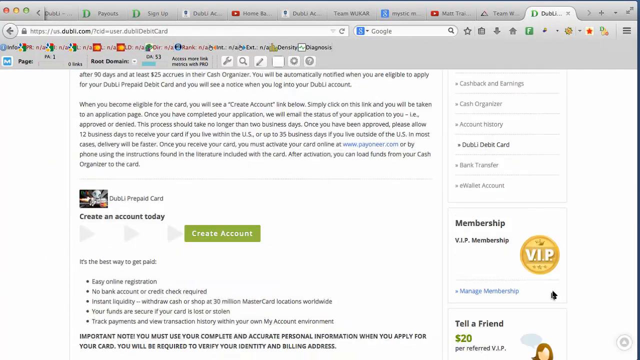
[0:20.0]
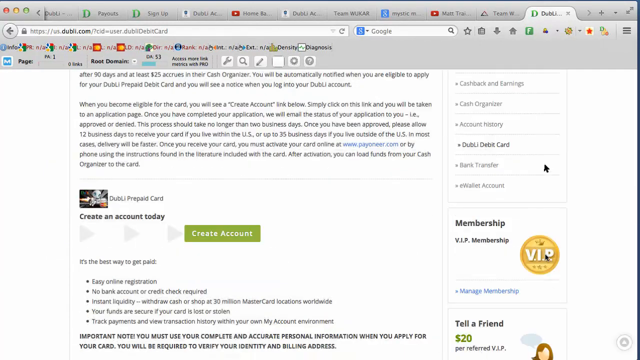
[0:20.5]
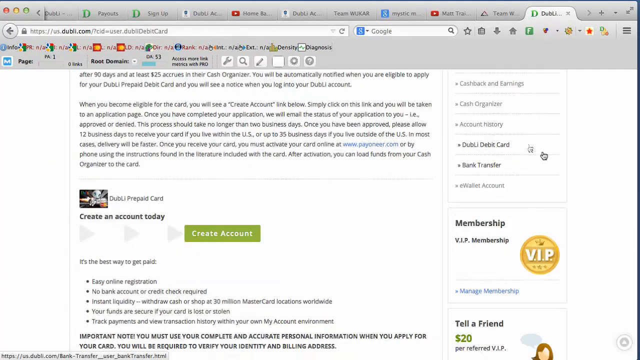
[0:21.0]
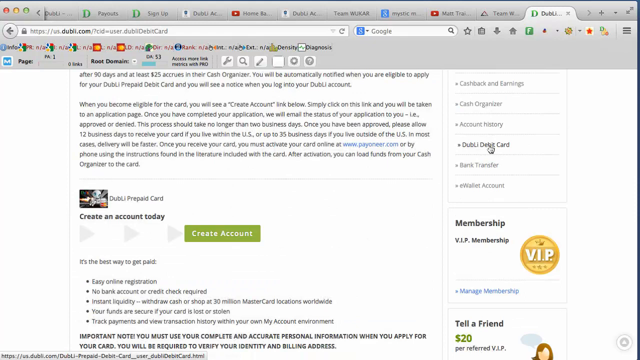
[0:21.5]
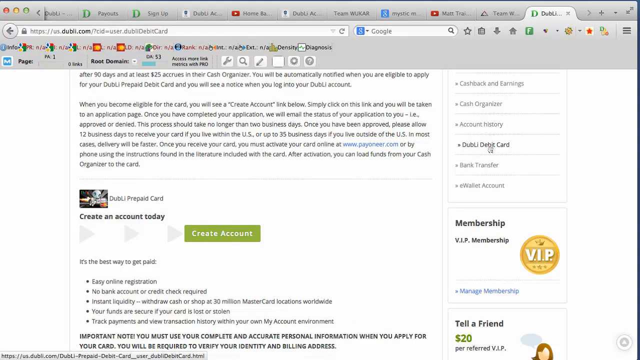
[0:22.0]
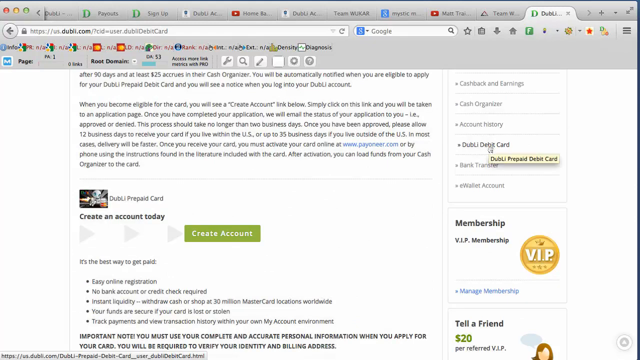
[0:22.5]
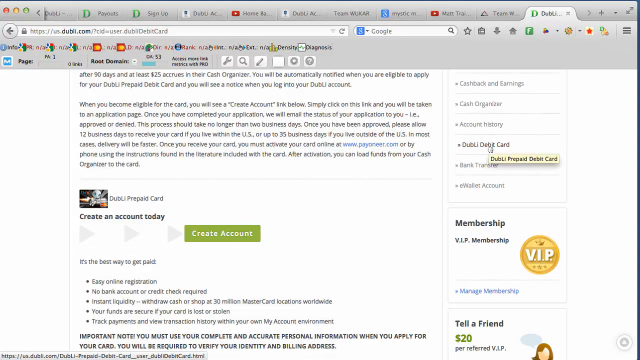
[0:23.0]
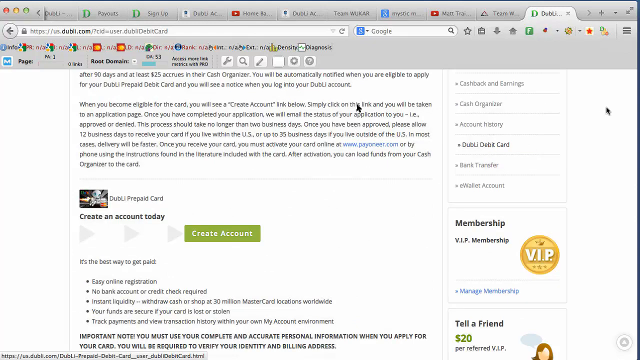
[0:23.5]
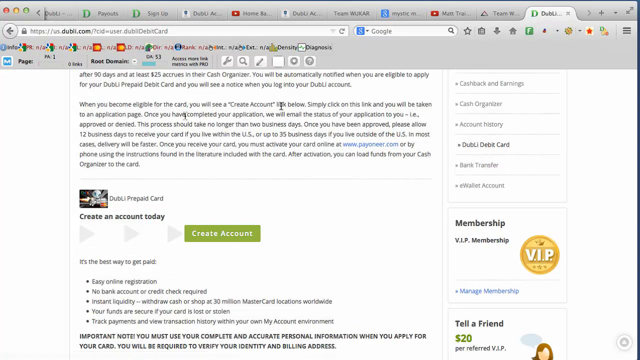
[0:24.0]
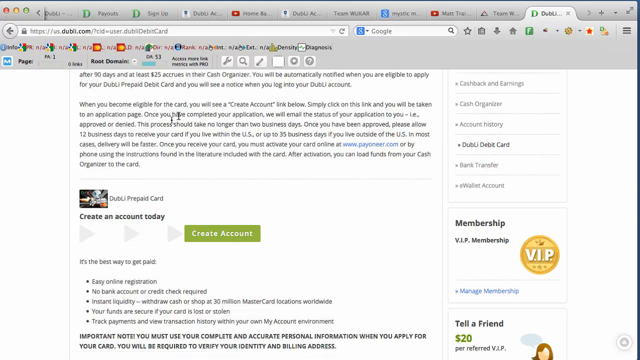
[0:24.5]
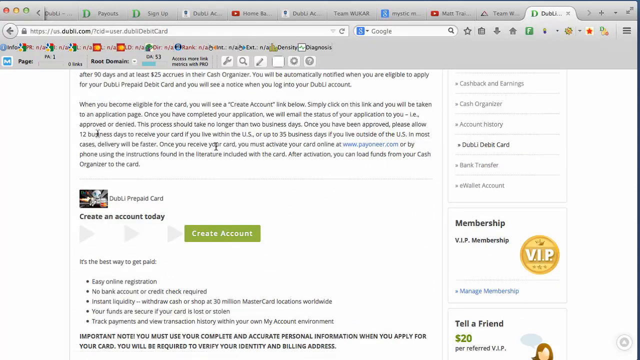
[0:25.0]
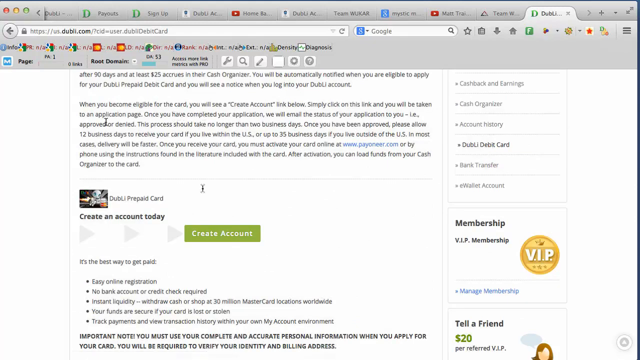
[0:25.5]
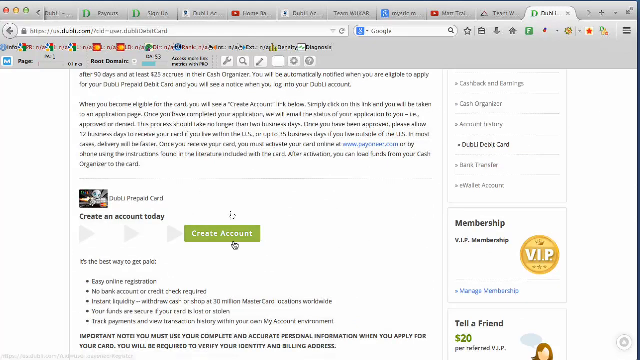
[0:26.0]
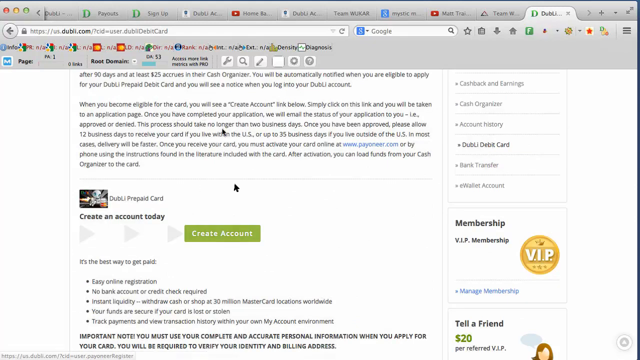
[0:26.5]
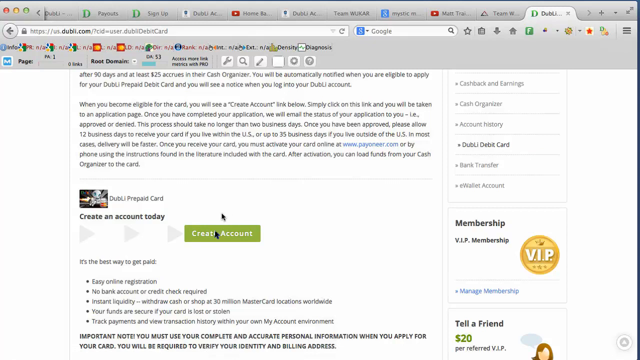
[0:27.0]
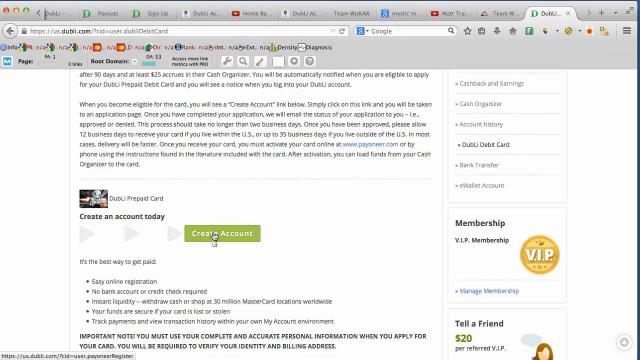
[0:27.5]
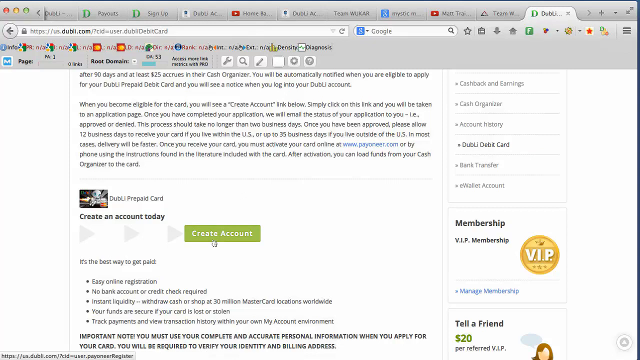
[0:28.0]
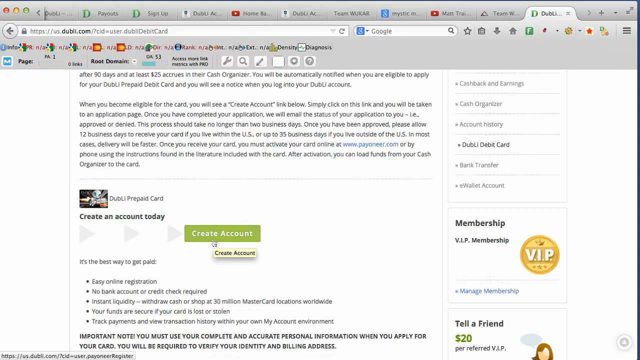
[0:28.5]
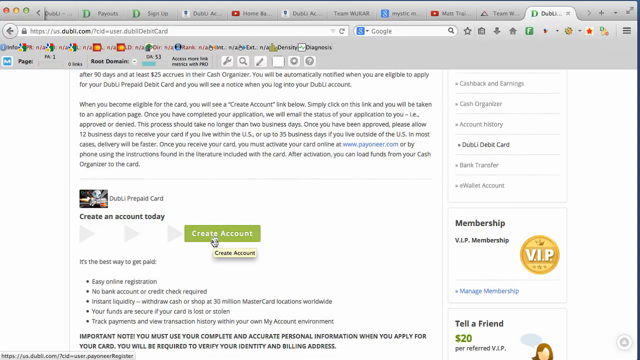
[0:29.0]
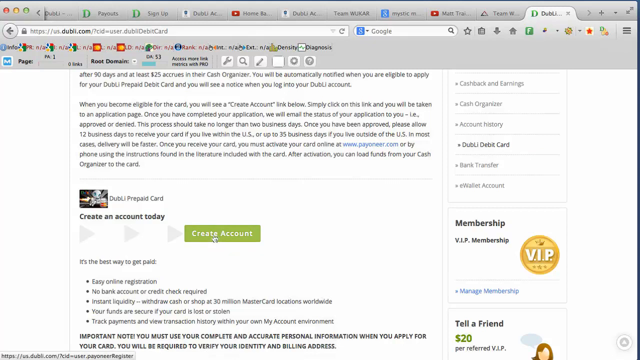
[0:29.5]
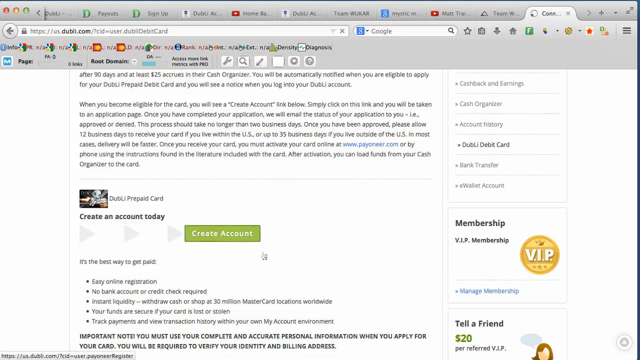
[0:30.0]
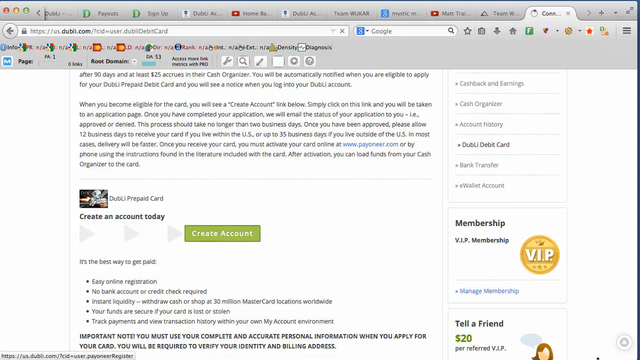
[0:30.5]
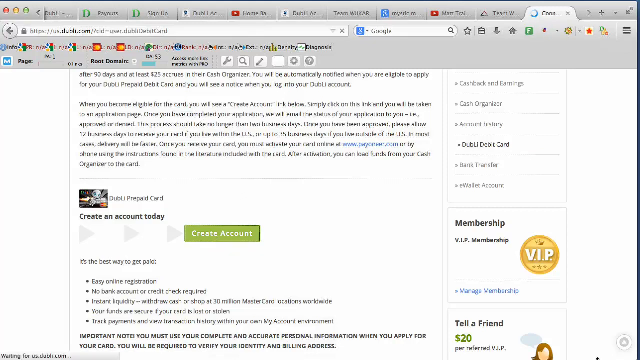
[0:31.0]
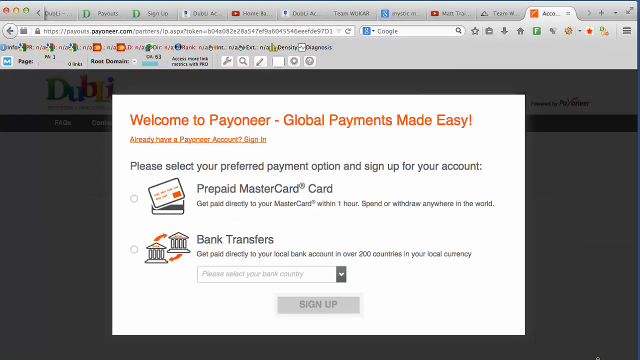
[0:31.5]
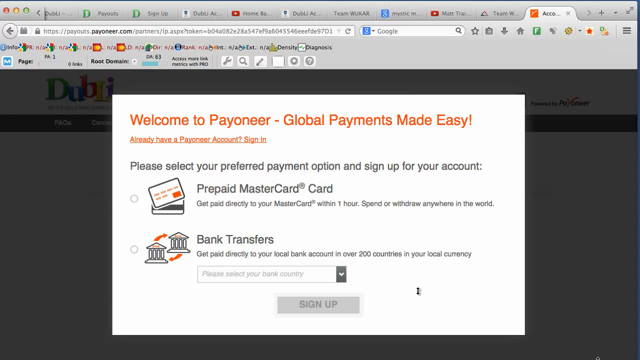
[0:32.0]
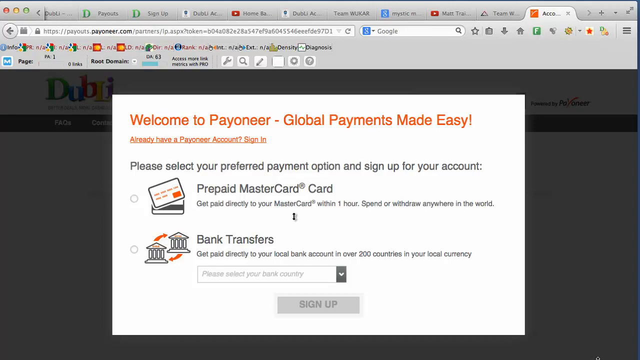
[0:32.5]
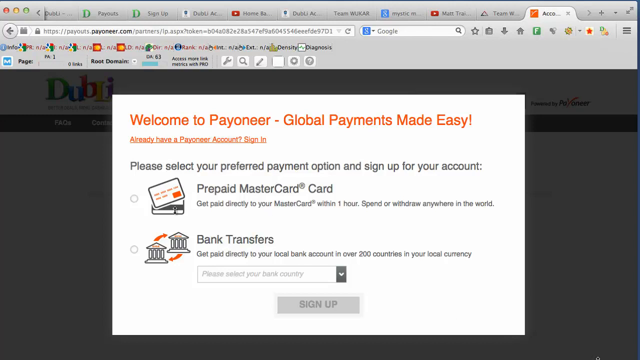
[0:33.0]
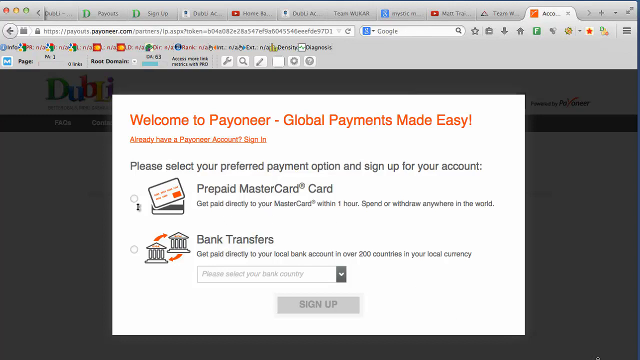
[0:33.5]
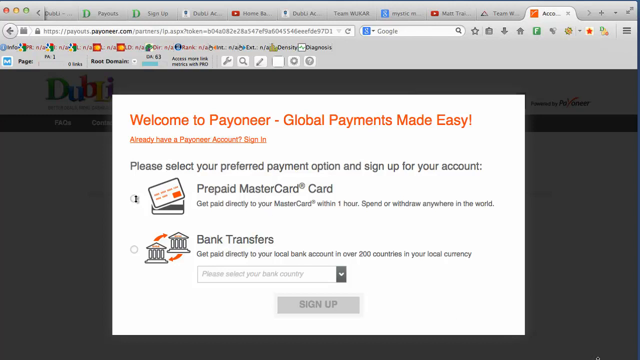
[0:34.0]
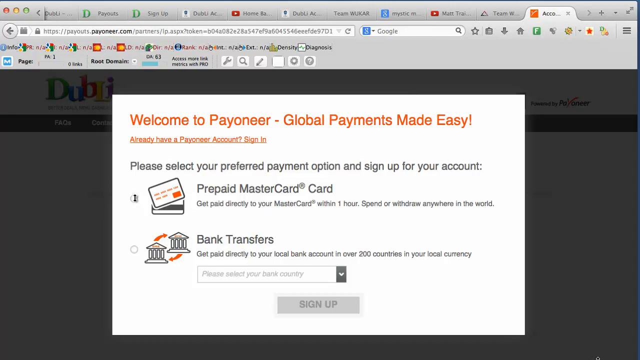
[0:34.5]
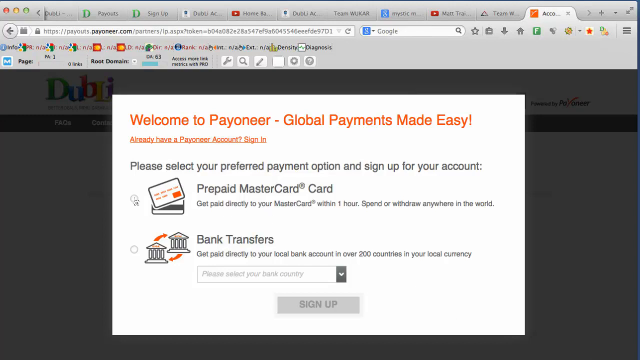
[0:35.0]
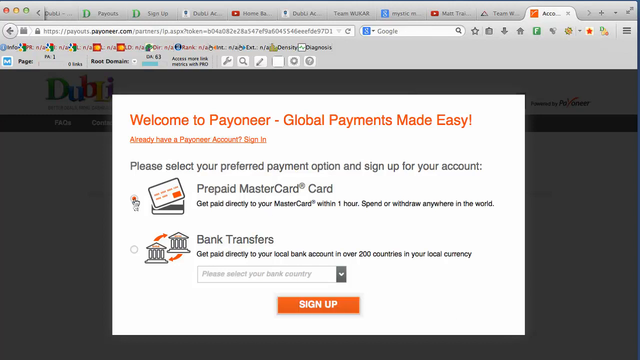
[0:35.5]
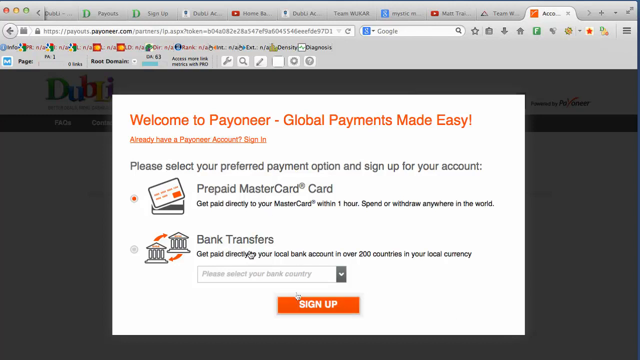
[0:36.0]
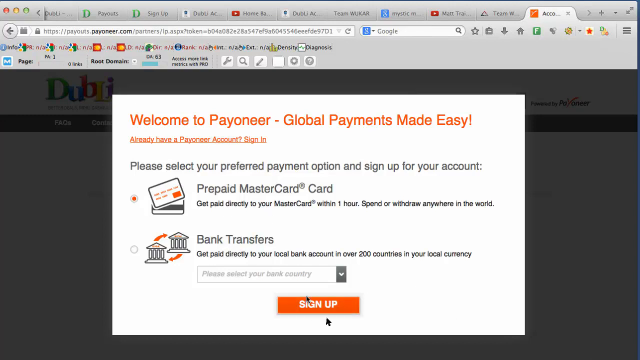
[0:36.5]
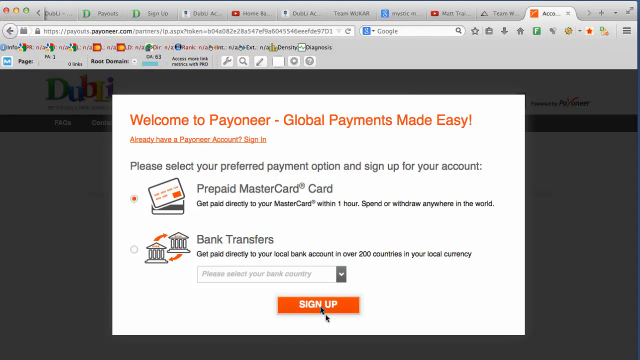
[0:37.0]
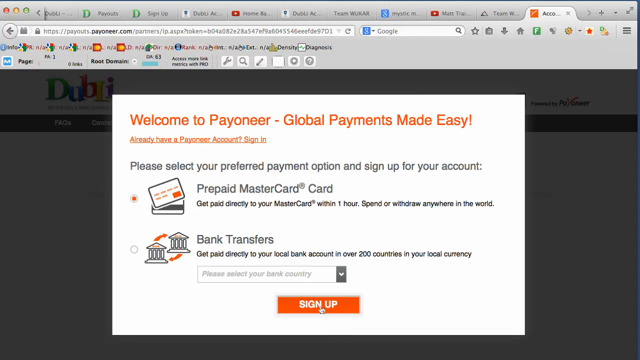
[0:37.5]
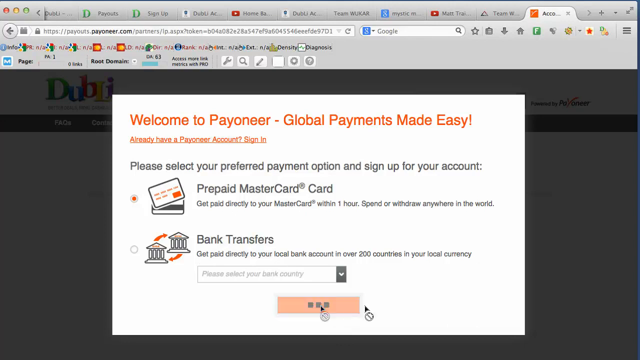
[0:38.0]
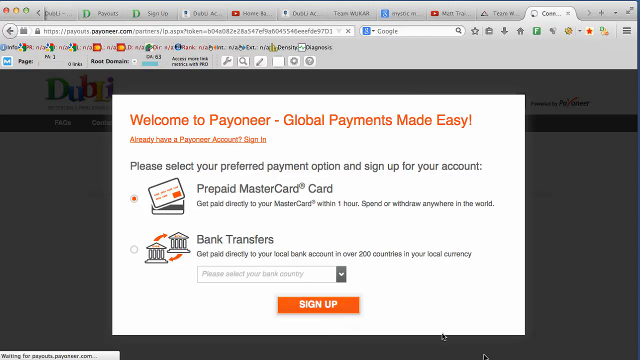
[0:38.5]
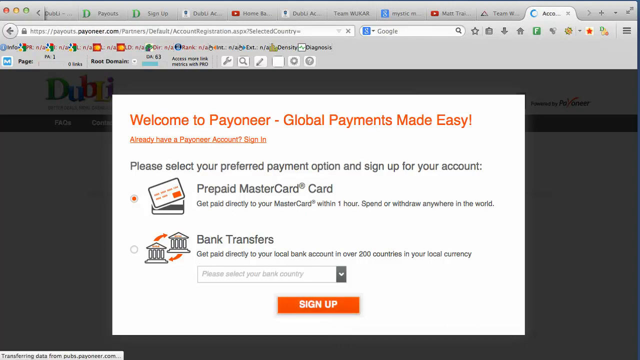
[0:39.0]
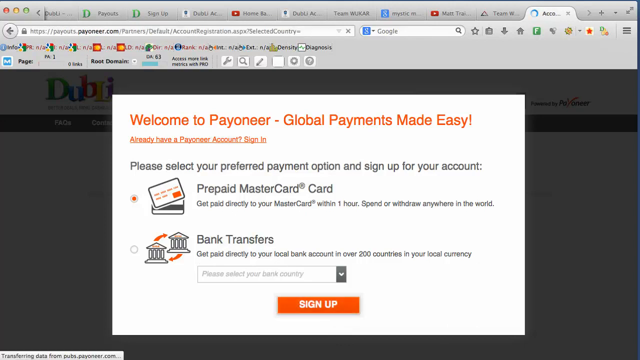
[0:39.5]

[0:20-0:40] Text on the website page appears to read: "when you become eligible for the card you will see a create account link below simply click on this link and you will be taken to the application page once you have completed your application. We will email the status of your application to you ie approval or denied the process should take no longer than two business days once you have been approved please allow 12 business days to receive your card if you live within the US or up to 25 business days if you live outside the US." The mouse cursor, on the right-hand side, hovers over some of this wording. The person then appears to click on "create account," and a page says "Welcome to Payoneer Global Payments Made Easy" with a sign-up button.